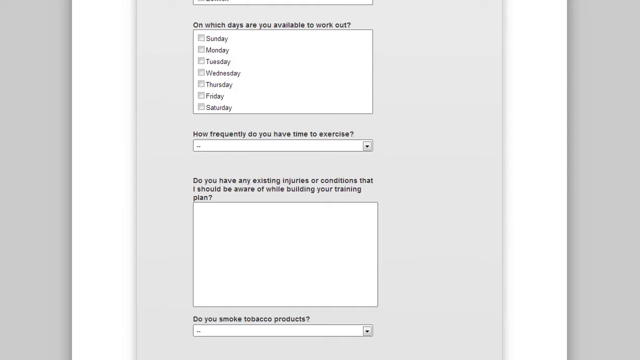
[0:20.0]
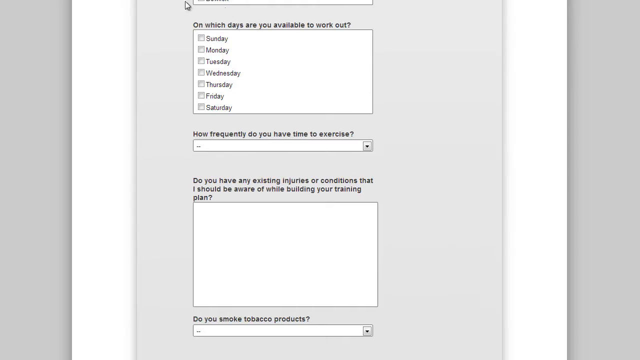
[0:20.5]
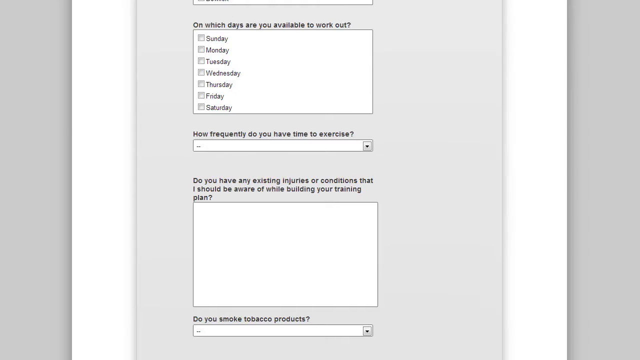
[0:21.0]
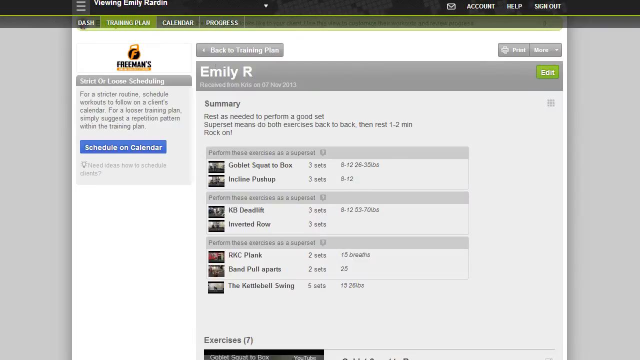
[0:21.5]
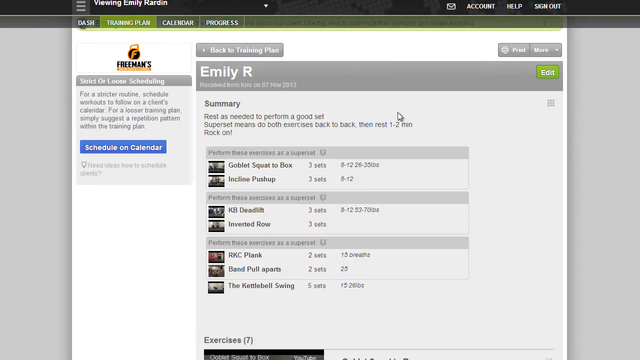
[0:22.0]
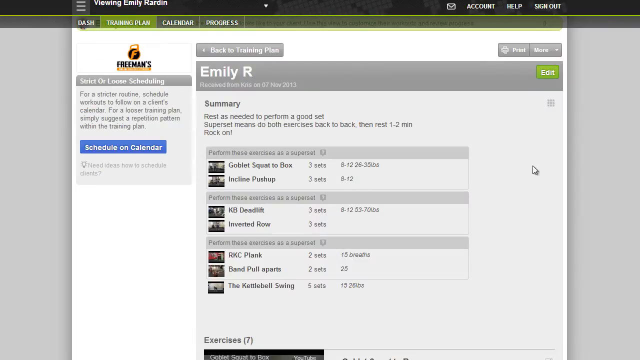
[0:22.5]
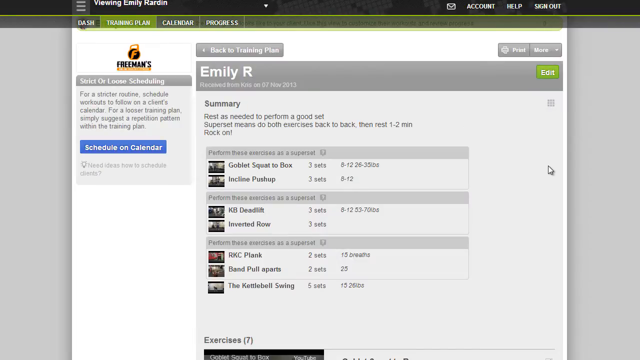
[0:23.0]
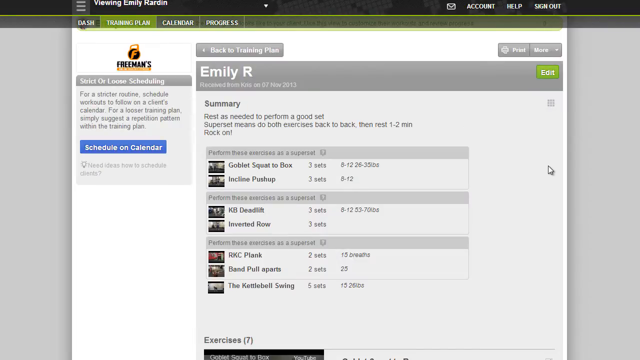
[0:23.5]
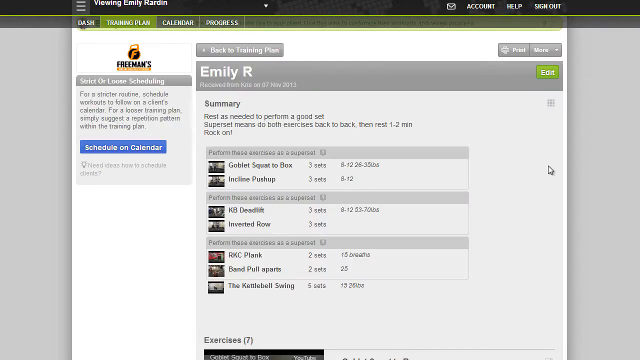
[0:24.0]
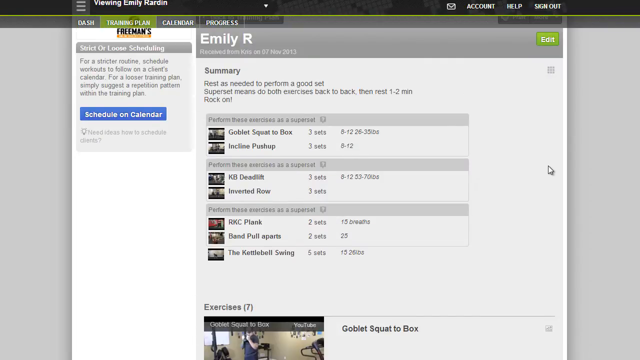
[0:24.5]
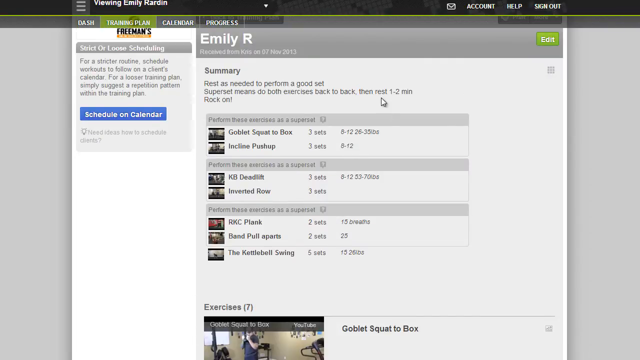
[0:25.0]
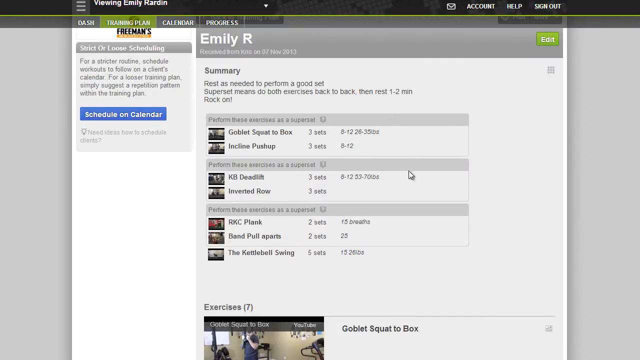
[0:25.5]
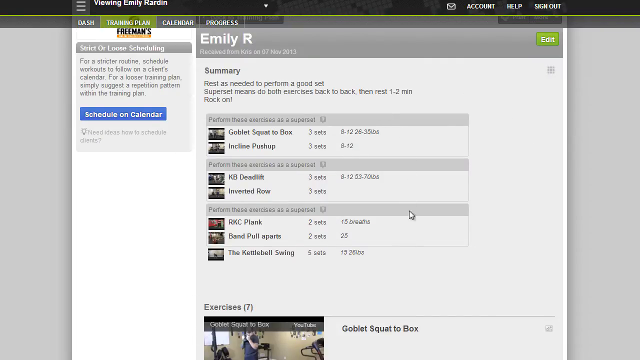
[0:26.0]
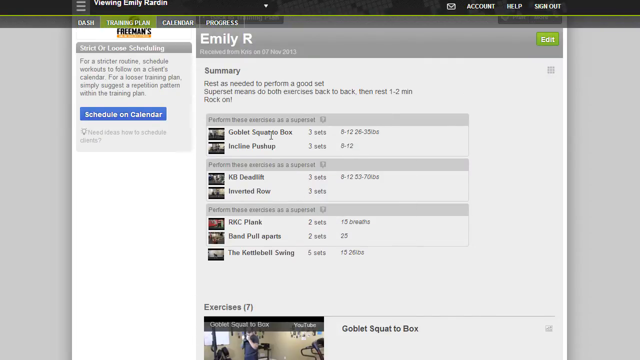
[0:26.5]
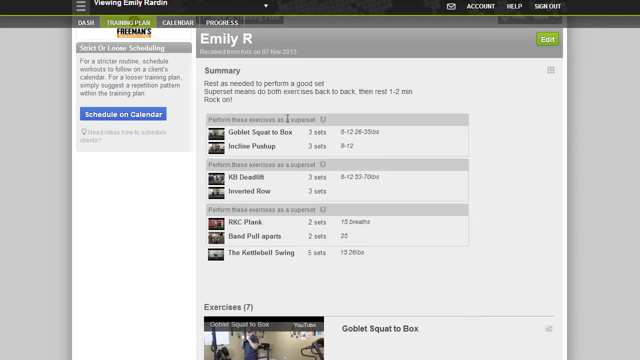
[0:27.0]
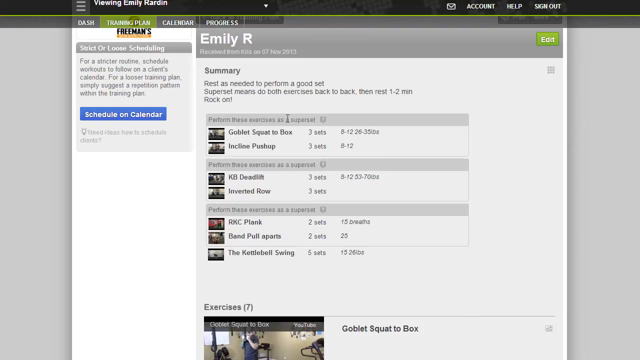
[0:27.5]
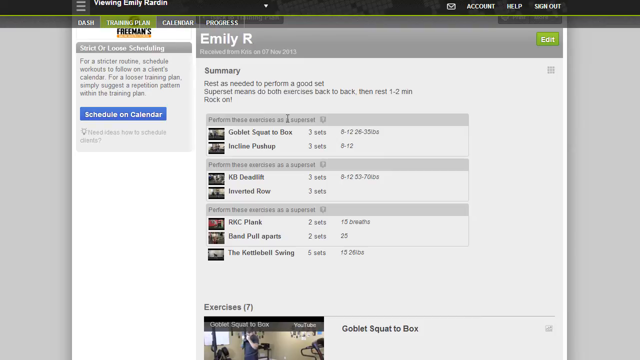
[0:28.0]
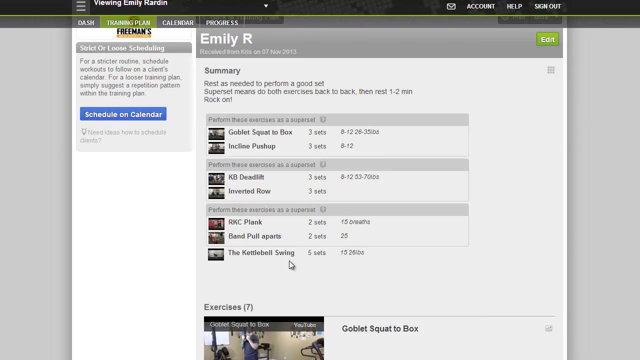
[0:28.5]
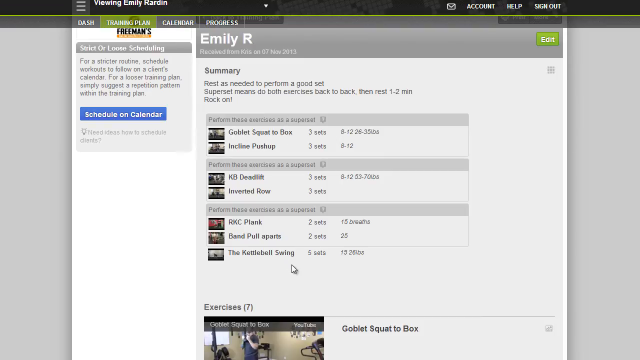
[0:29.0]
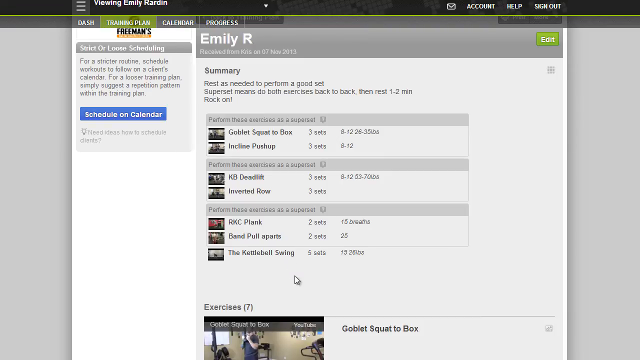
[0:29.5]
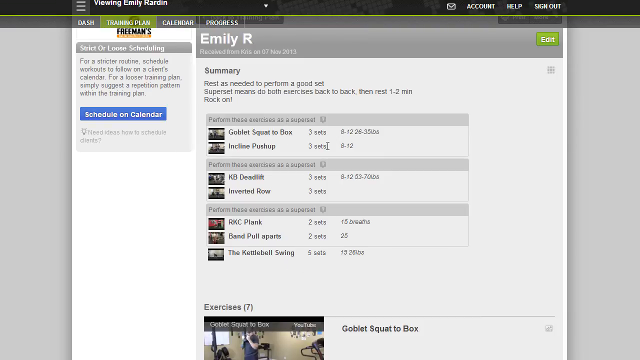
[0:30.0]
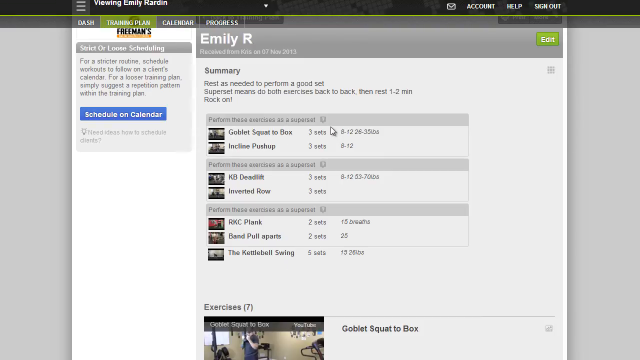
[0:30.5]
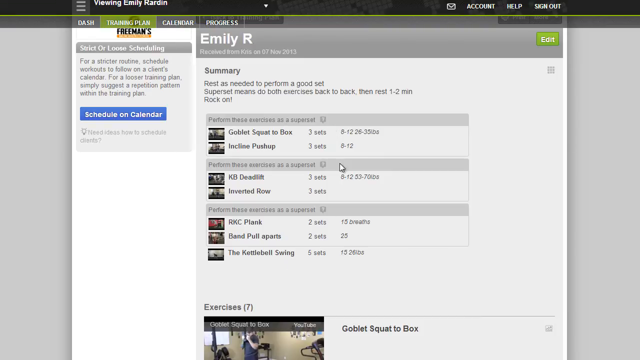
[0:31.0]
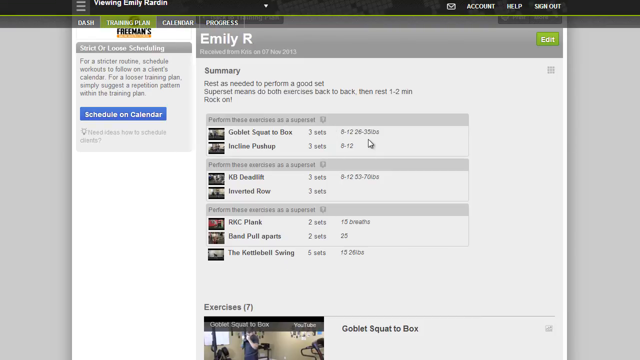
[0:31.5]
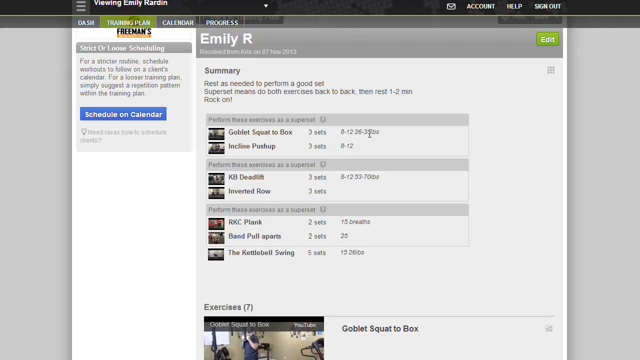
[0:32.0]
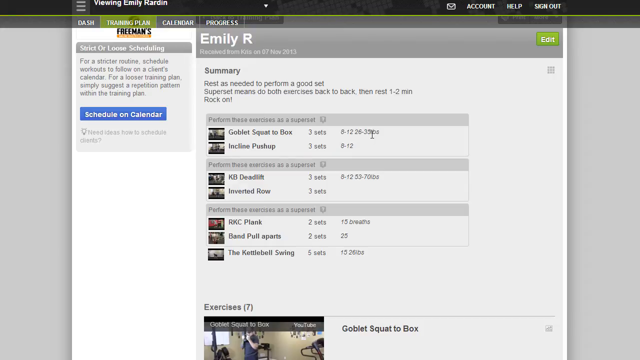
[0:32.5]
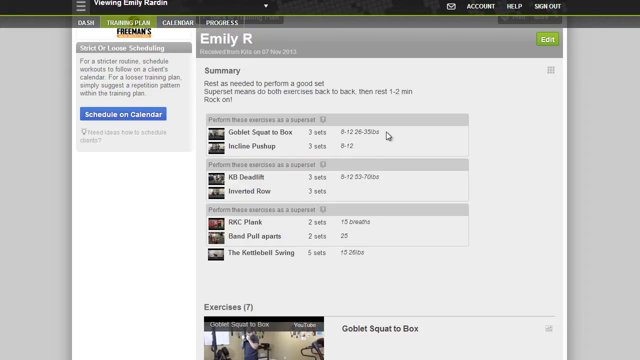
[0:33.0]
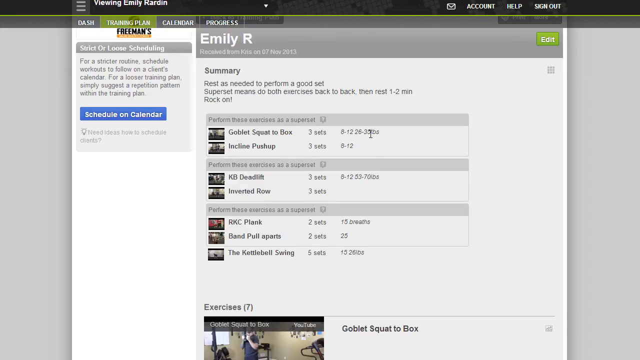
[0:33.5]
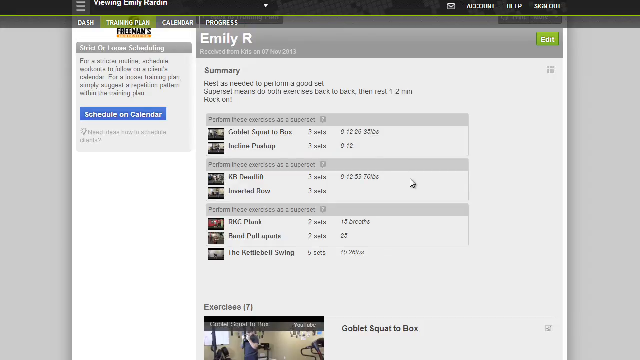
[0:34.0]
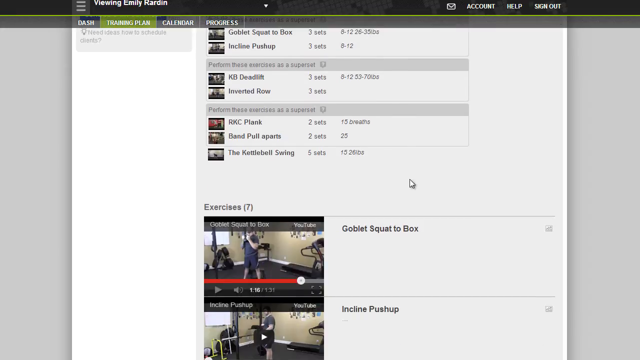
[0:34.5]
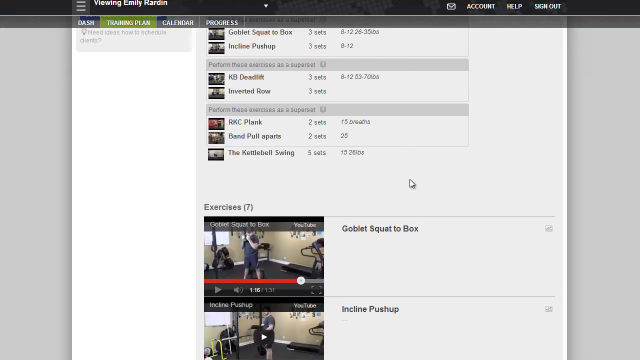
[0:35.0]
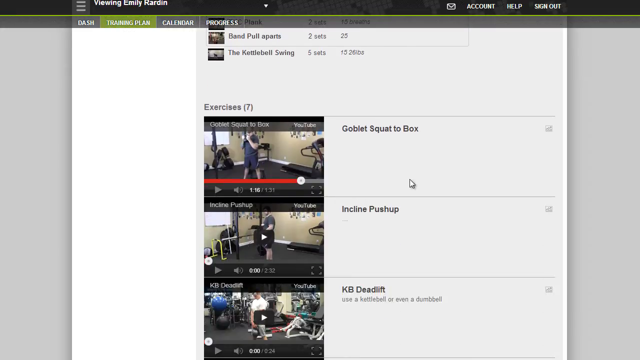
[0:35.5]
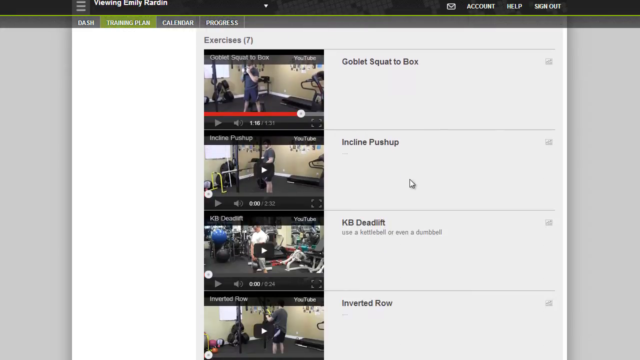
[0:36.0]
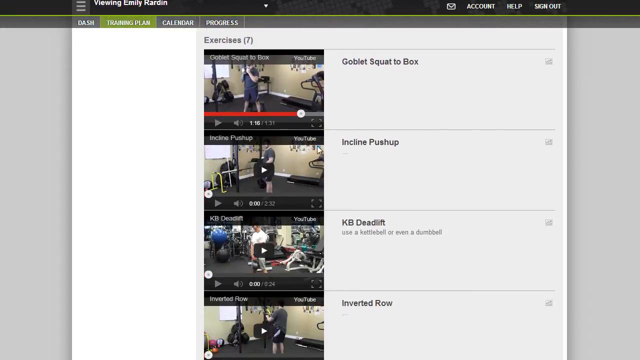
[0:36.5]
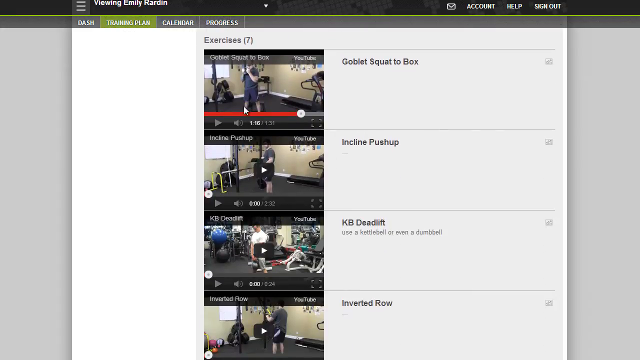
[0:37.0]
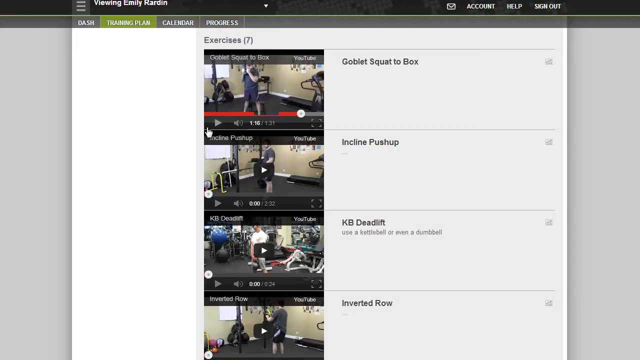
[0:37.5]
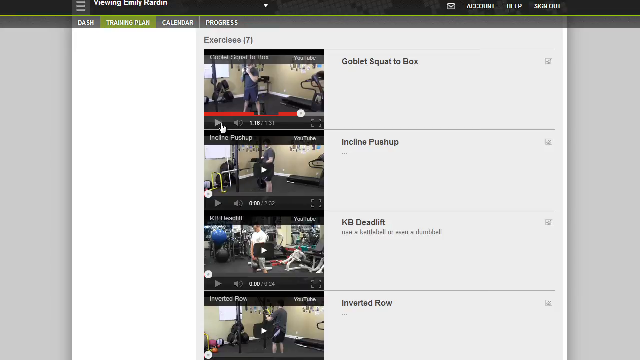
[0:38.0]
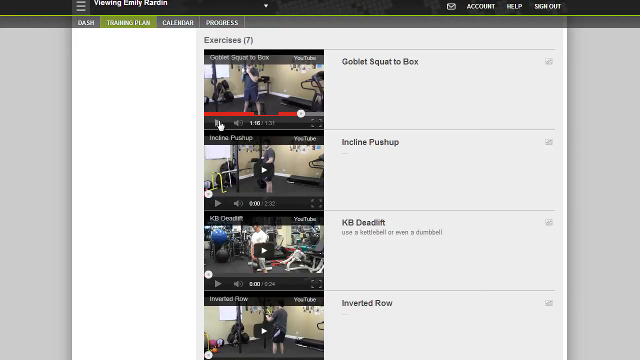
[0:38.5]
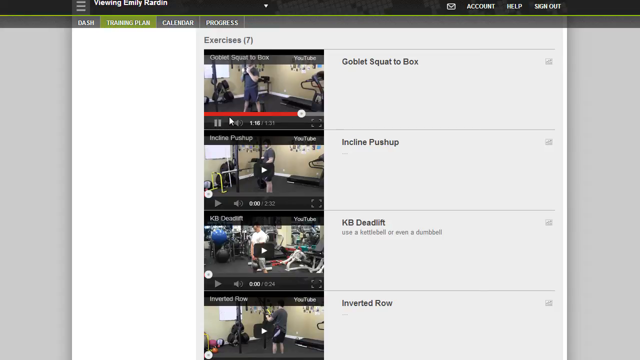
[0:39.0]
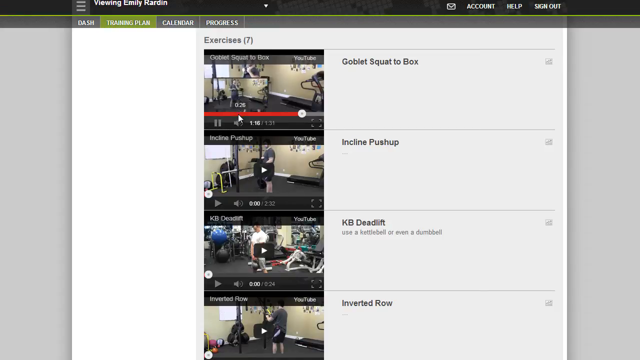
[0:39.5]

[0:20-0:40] A computer screen reads "viewing Emily Carden" in its top left-hand corner. Below it, an olive green stripe runs across the whole top of the screen, holding tabs from left to right: "Dash," "Training Plan," "Calendar" and "Progress." Directly beneath that it reads "back to training plan," and below that is a long gray stripe with "Emily R" in its top left corner. Underneath is another page whose top left corner reads "summary. Rest as needed to perform a good set. Super set means do both exercises back-to-back then rest 1-2 minutes. Rock on!" Below that is a list reading "goblet squat to box incline push-ups KB deadlift inverted row," with further entries including "plank band pull apart" and "kettleball swing." A small pointer moves around the screen as someone moves the mouse.